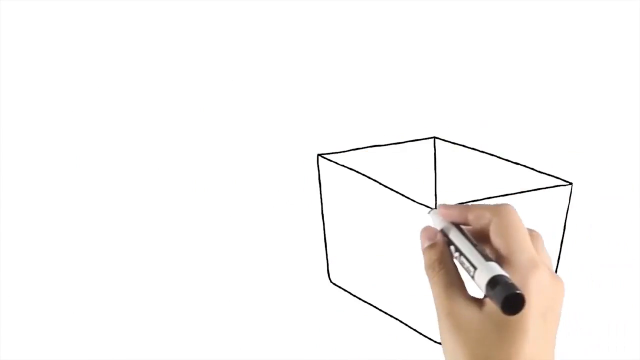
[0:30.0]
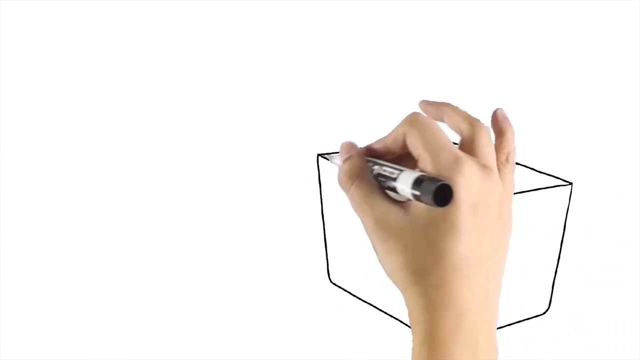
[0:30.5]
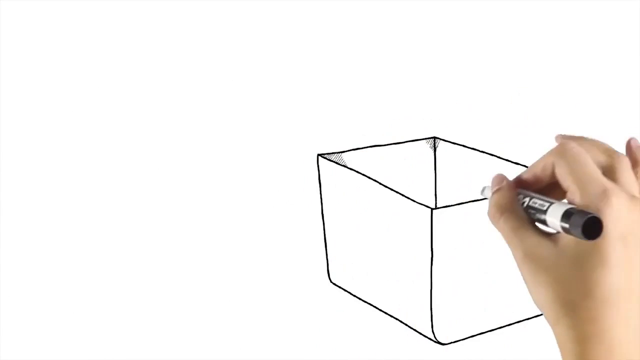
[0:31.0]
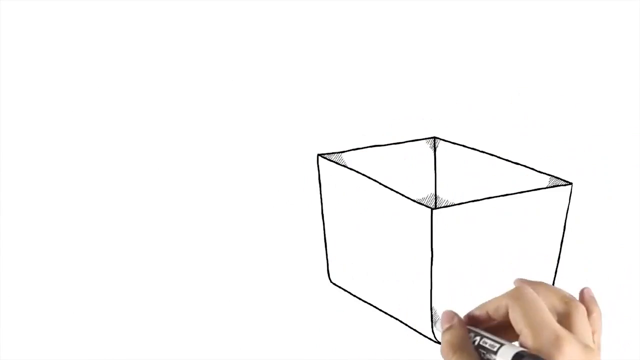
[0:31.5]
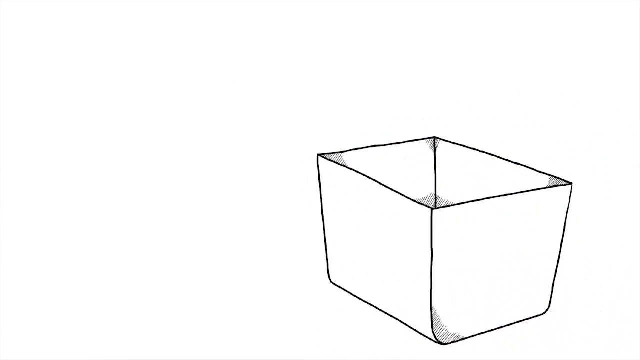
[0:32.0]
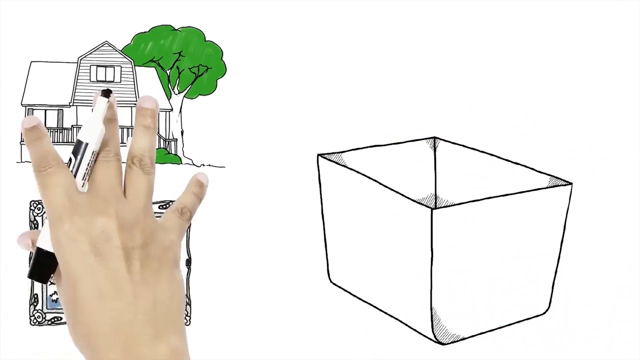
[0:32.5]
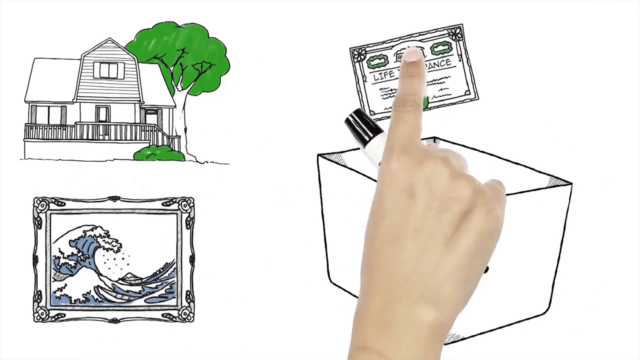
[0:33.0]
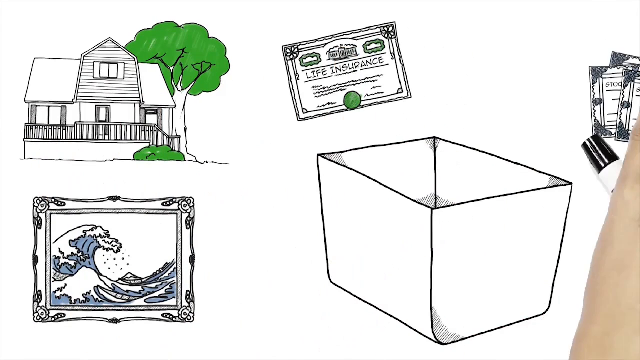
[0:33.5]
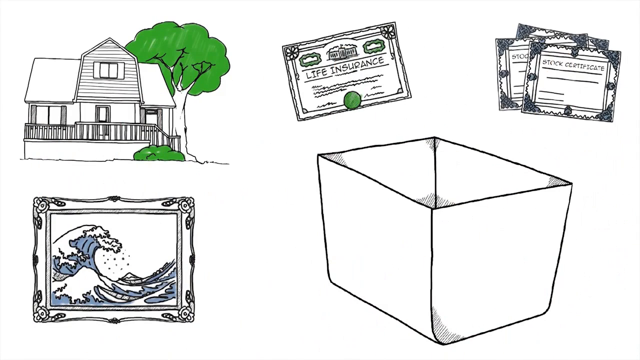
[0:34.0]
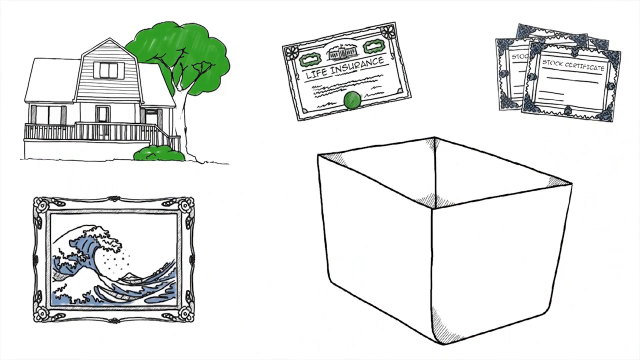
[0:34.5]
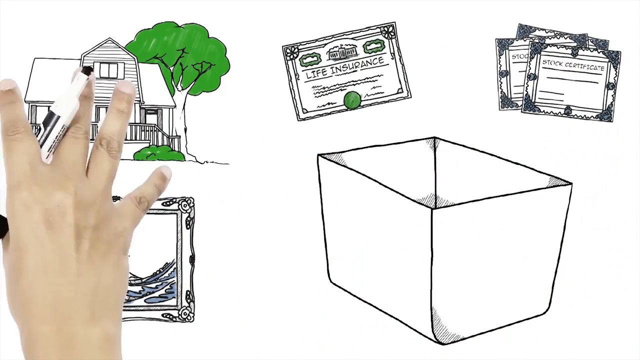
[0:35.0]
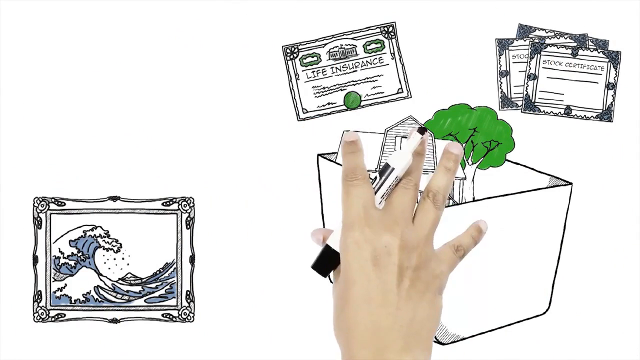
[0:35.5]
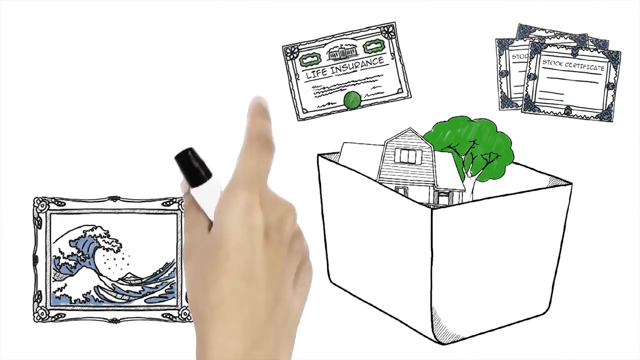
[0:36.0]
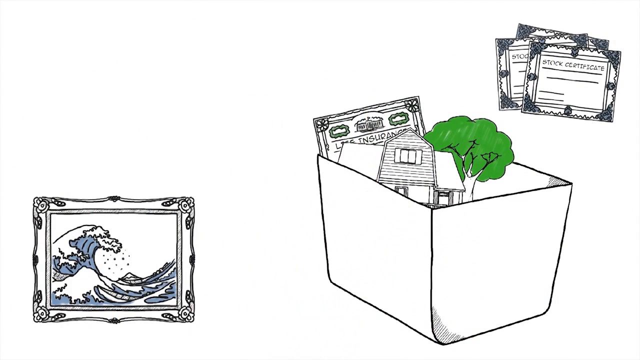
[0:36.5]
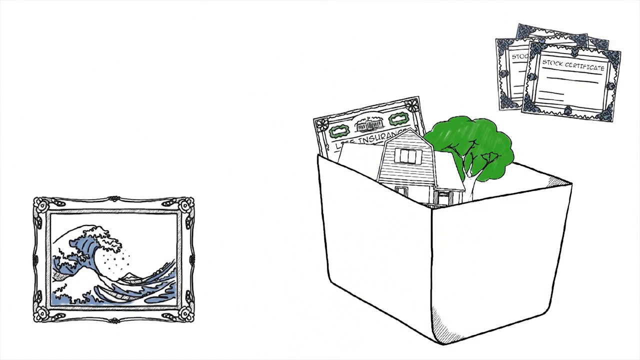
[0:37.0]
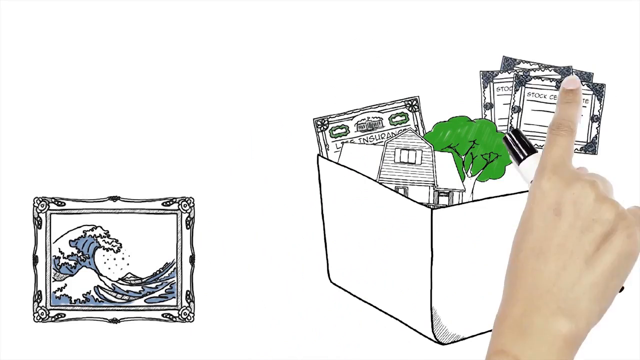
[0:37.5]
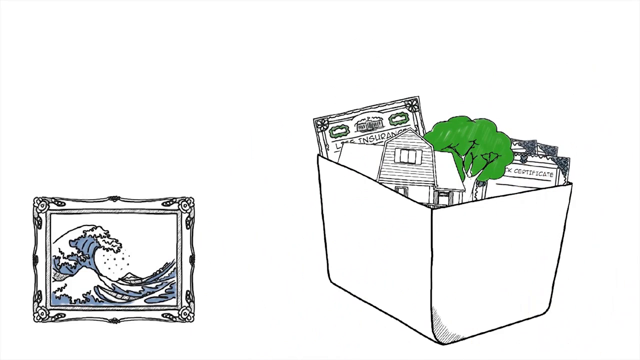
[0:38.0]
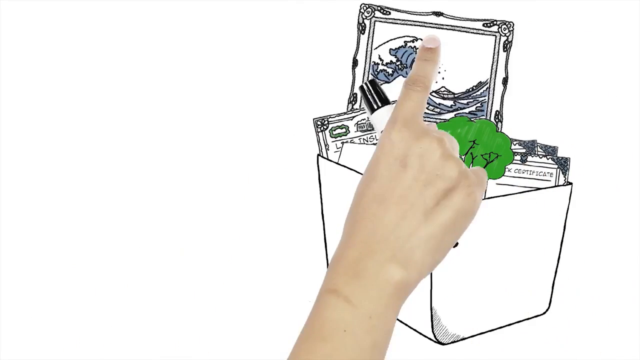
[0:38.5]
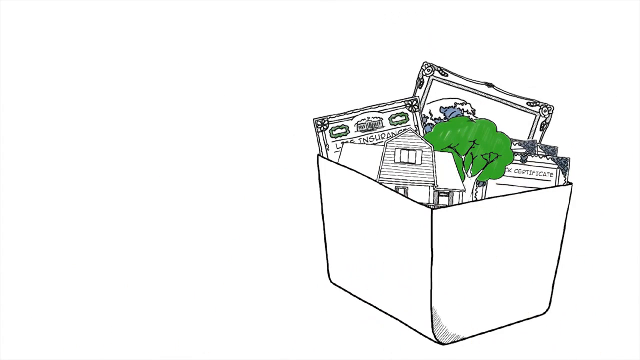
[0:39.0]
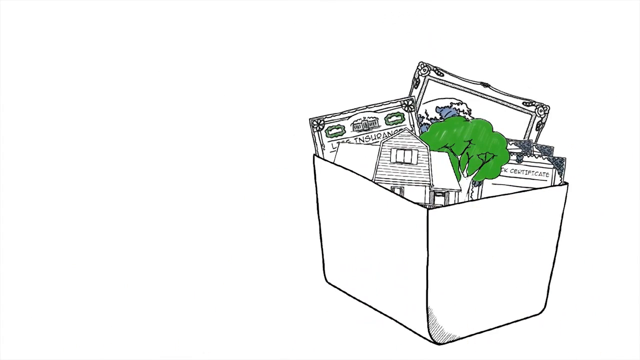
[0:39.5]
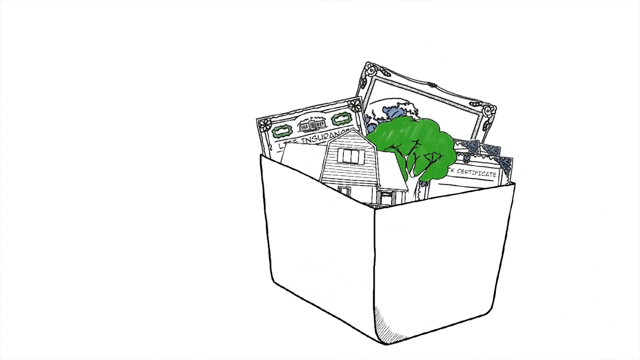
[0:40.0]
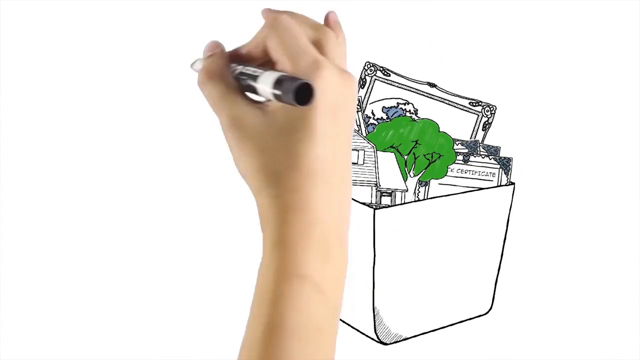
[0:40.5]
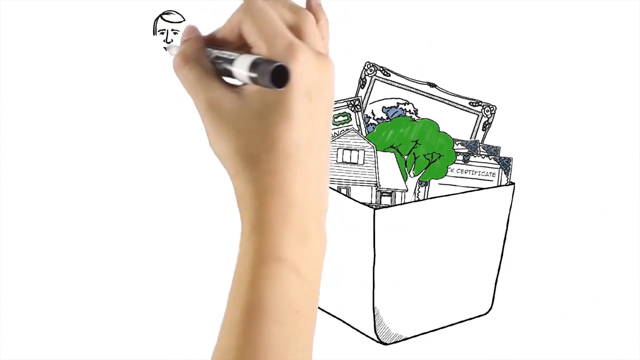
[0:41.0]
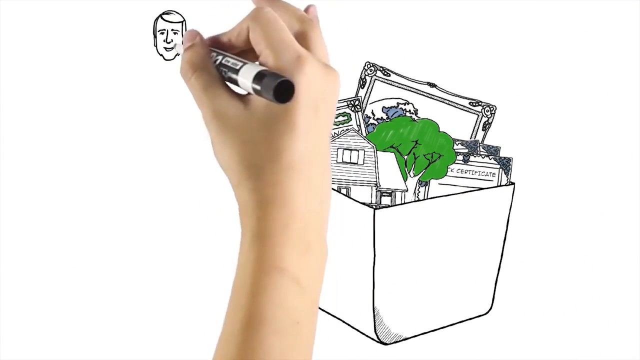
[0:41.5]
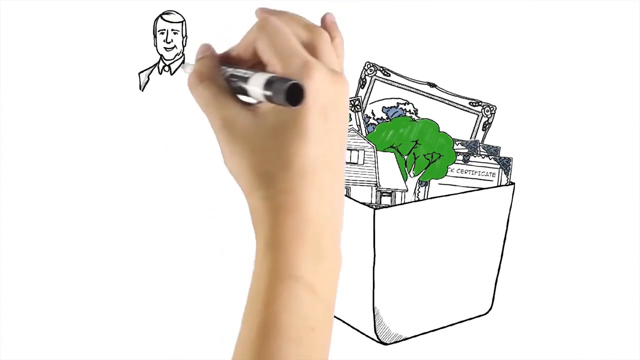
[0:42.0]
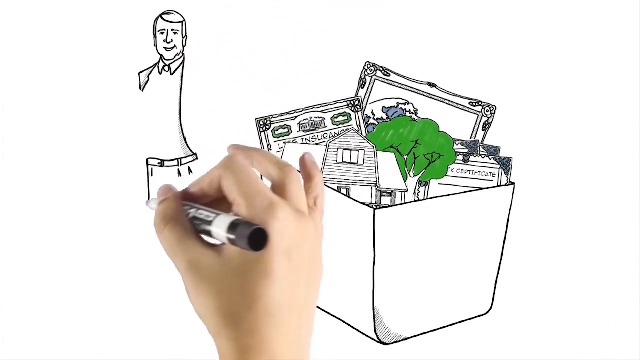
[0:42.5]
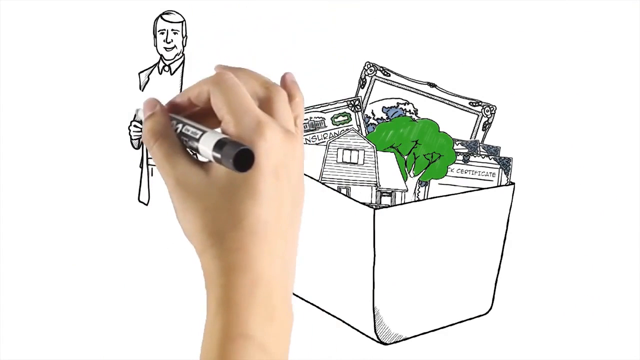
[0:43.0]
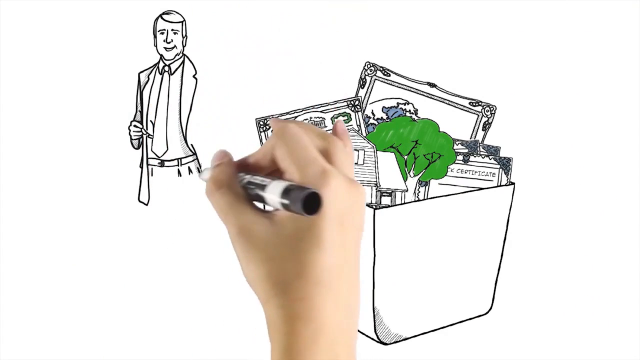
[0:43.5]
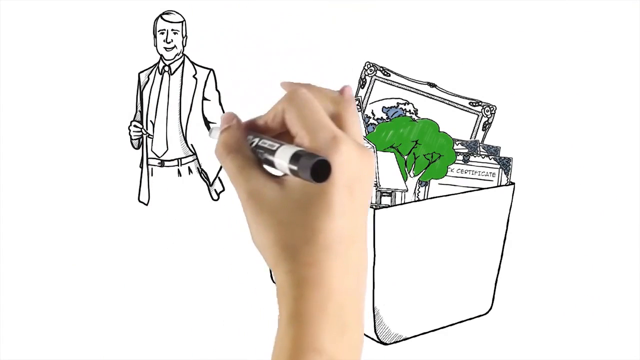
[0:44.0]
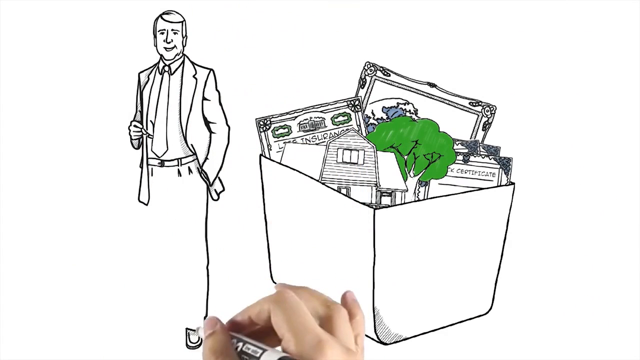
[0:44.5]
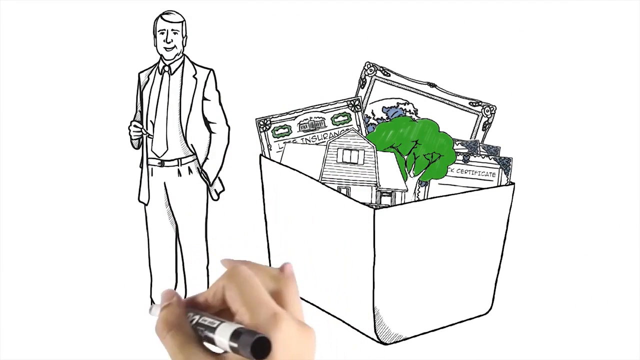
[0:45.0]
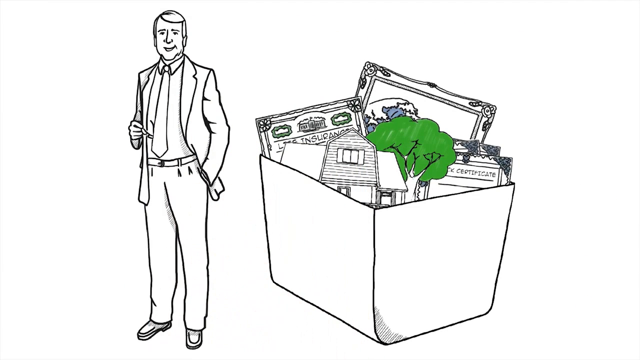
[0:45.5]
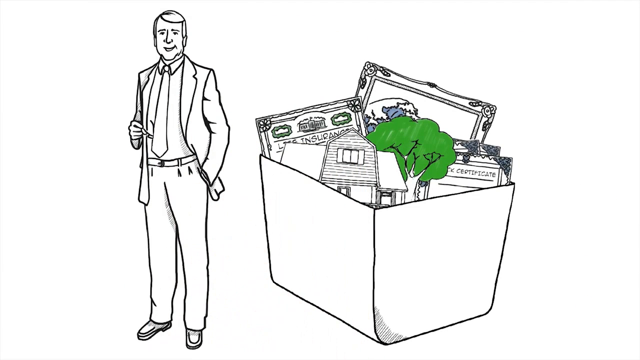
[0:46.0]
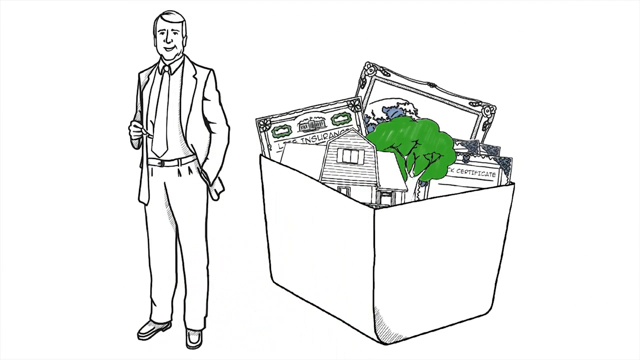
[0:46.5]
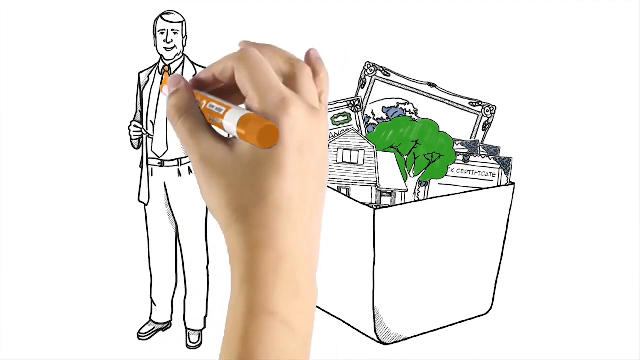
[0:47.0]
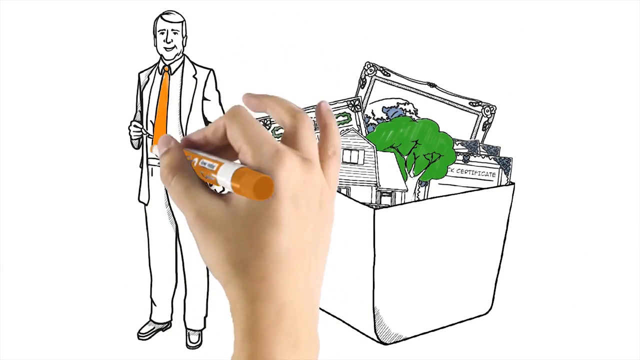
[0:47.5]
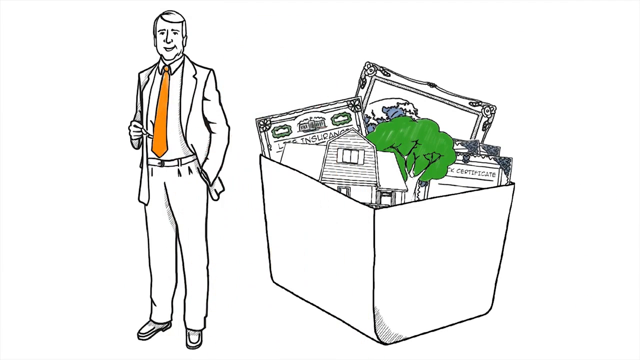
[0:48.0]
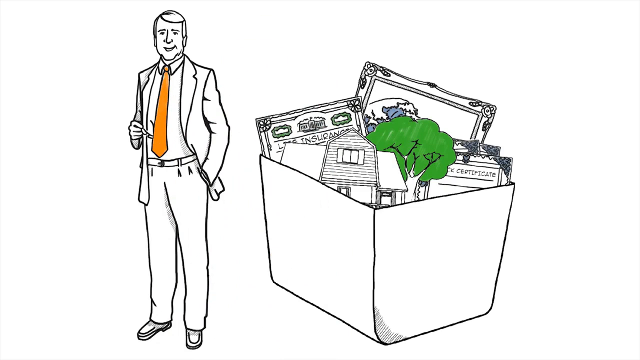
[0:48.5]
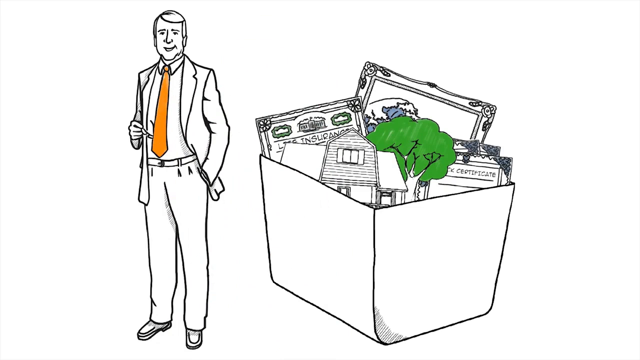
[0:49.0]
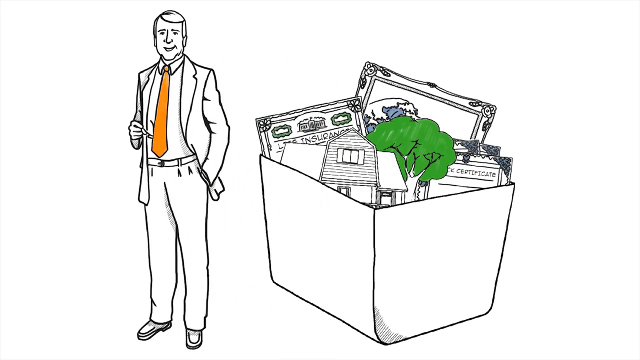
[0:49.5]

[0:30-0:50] The box is drawn by the right hand of a white person clutching what looks like a whiteboard pen. The box has no lid, and the pen adds shading into its corners. The hand then moves in ready-drawn line sketches: a house with a tree to its right, a picture frame with a wave crashing on it, a life insurance piece of paper, and stock certificates. A finger pushes these in around the box, and then into the box, first the house, then the life insurance, then the stocks, then the picture. The pen then draws a line drawing of a man in a smart suit with a tie on the left side, and the hand colours the tie orange. The hand holding the pen is white with short nails, and the pen's black lid has been reattached to its back end.